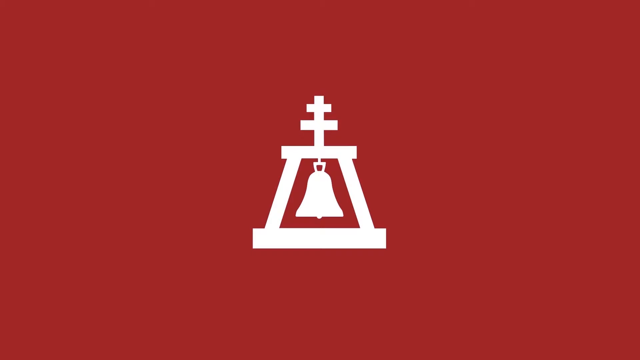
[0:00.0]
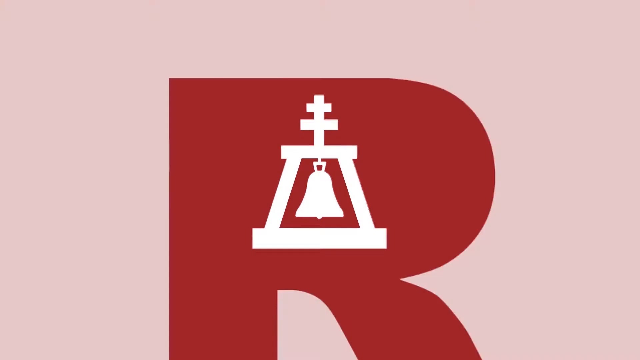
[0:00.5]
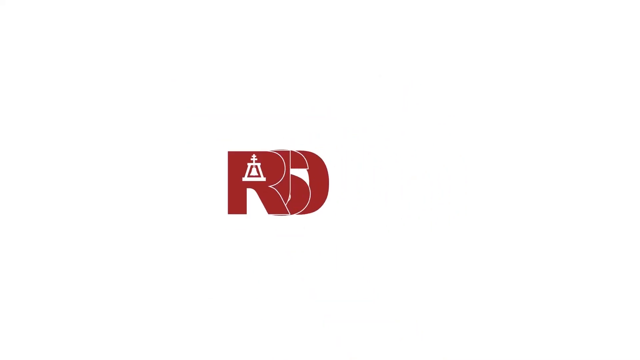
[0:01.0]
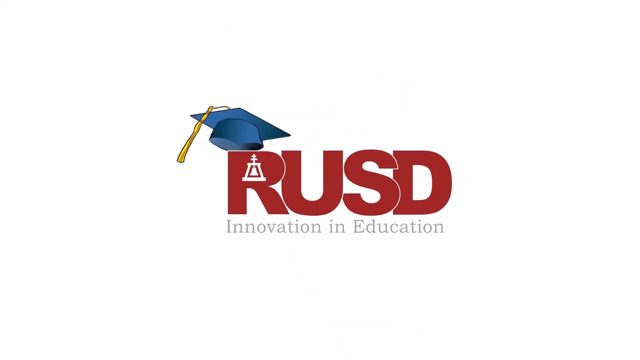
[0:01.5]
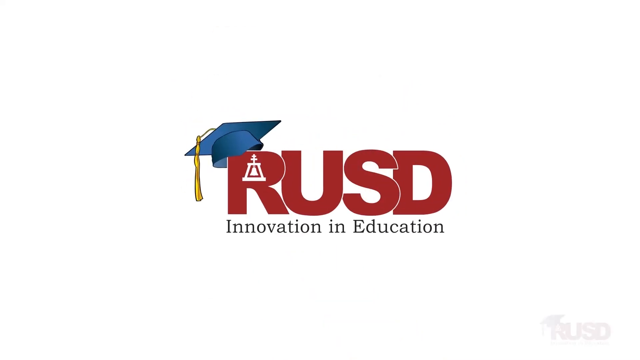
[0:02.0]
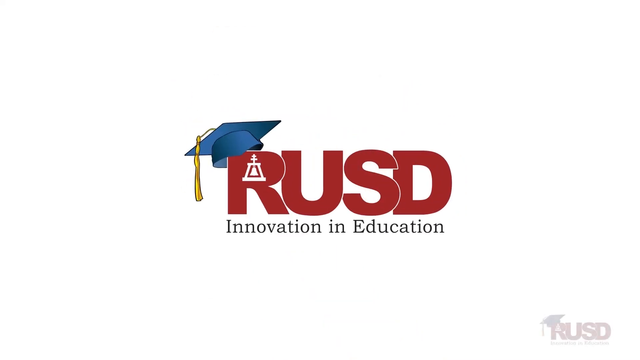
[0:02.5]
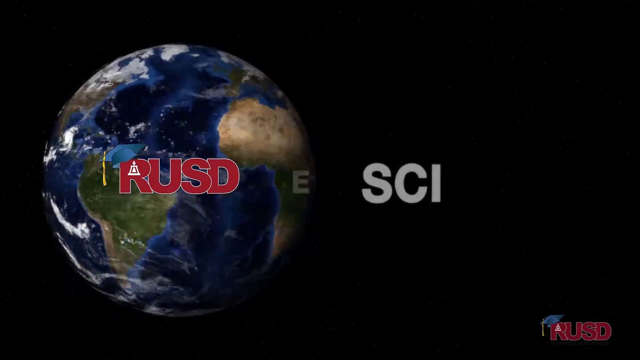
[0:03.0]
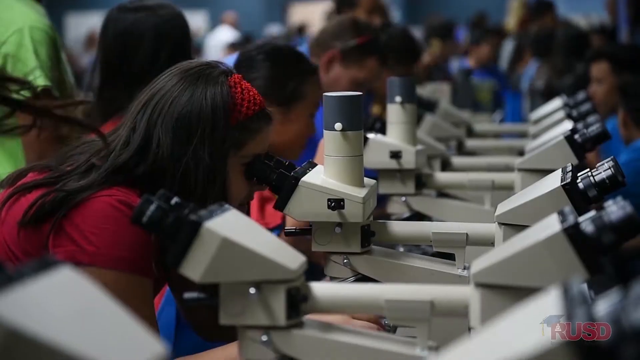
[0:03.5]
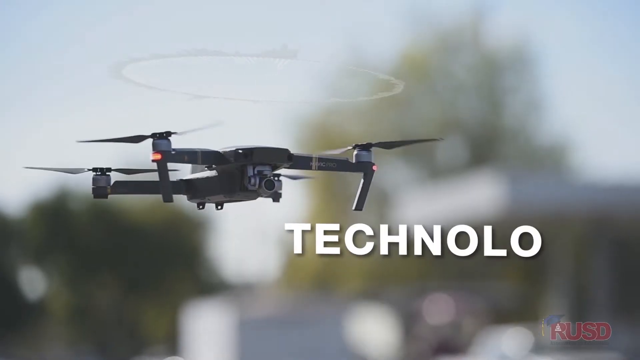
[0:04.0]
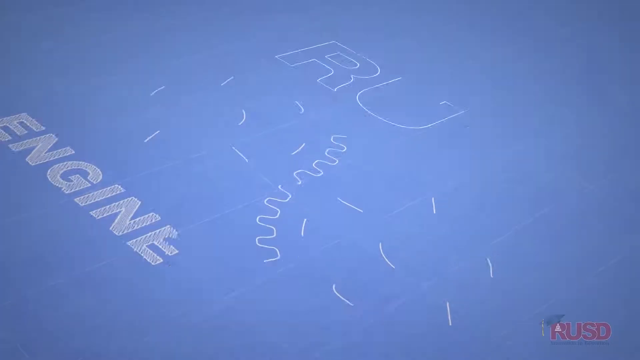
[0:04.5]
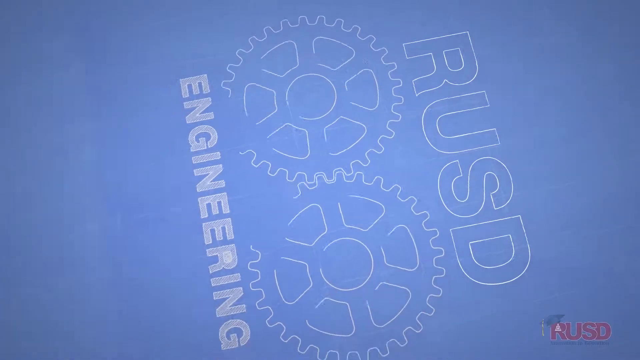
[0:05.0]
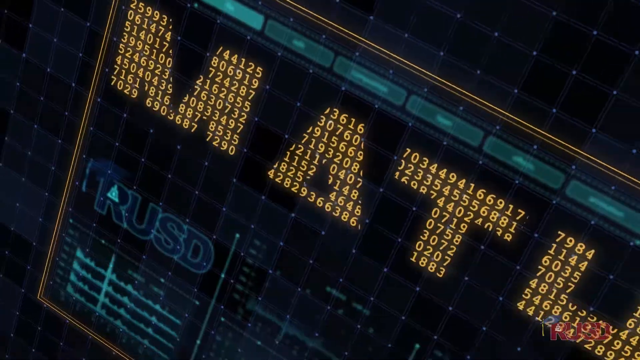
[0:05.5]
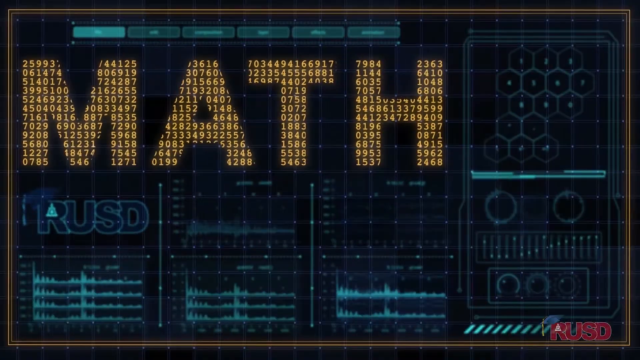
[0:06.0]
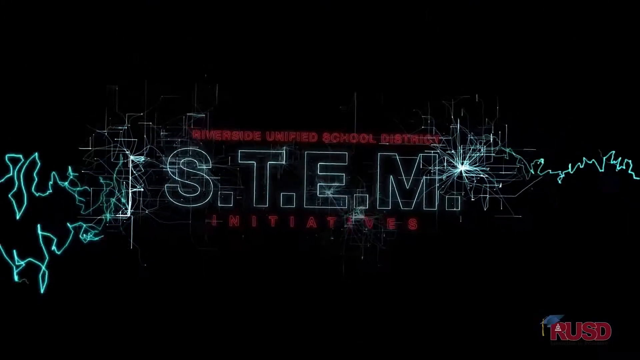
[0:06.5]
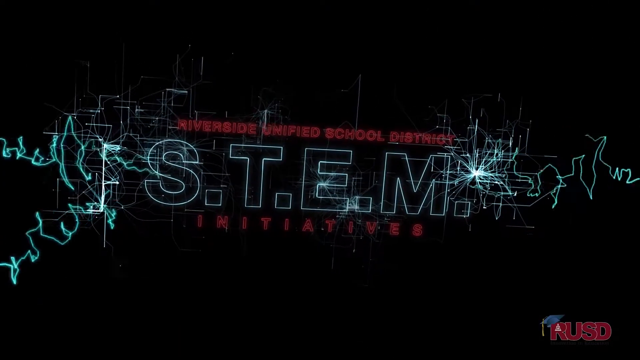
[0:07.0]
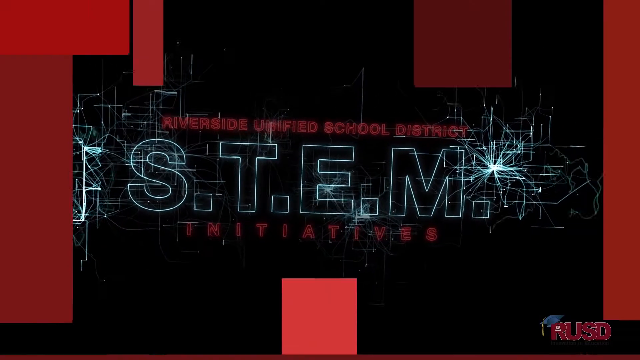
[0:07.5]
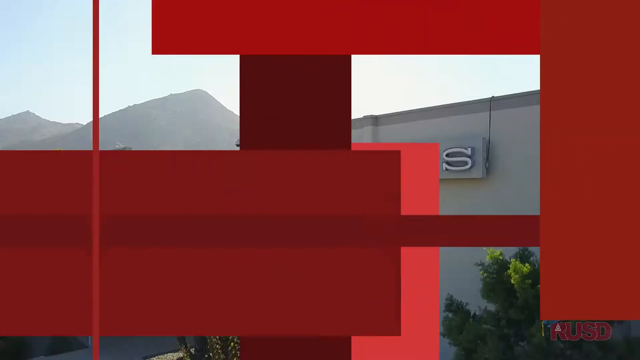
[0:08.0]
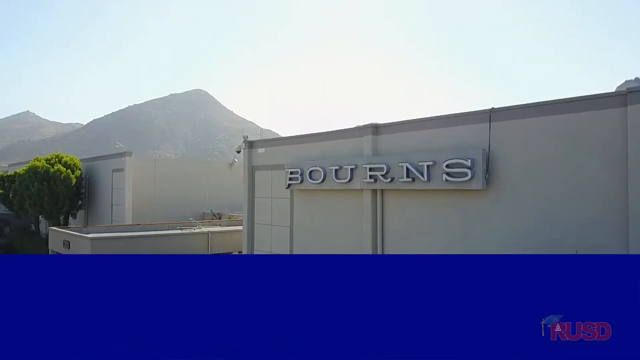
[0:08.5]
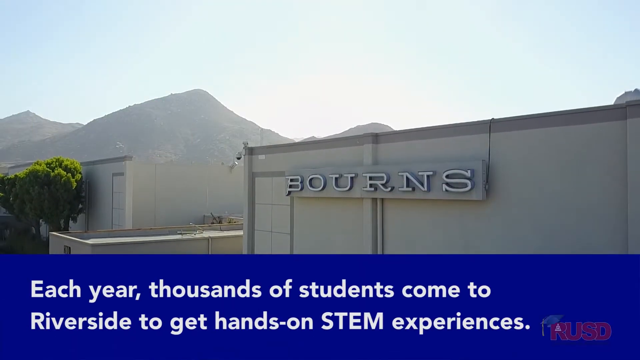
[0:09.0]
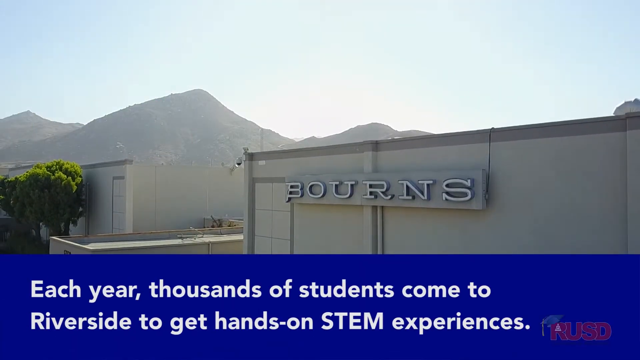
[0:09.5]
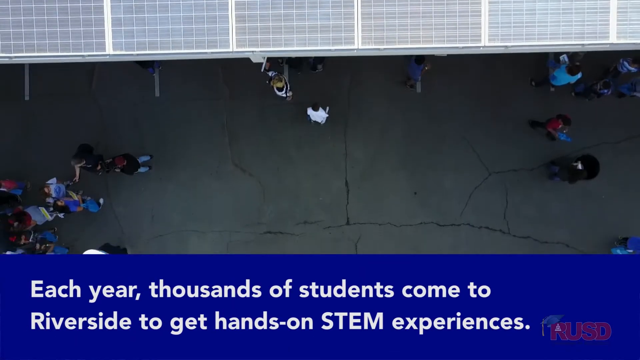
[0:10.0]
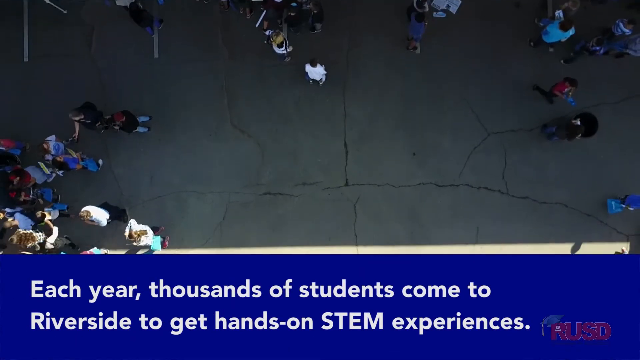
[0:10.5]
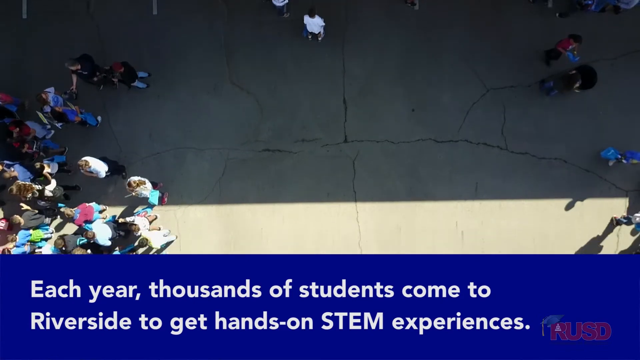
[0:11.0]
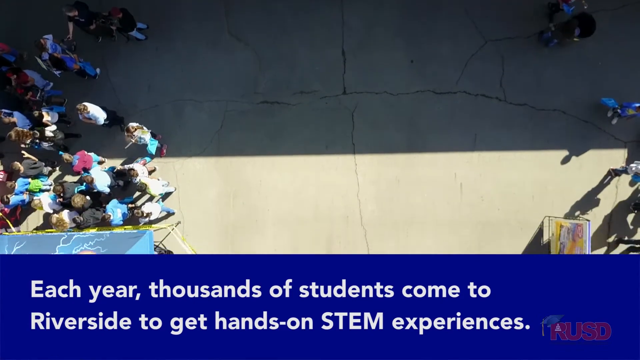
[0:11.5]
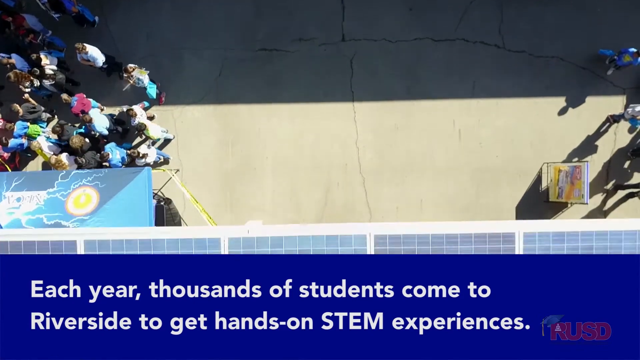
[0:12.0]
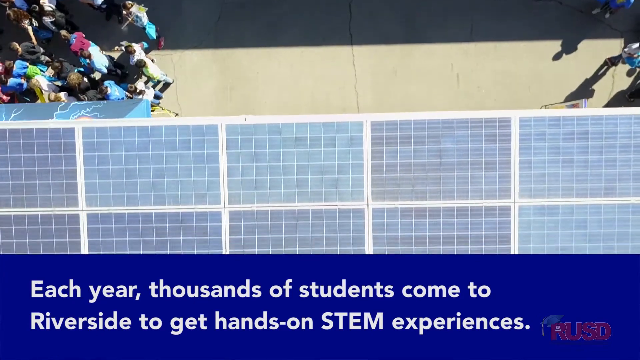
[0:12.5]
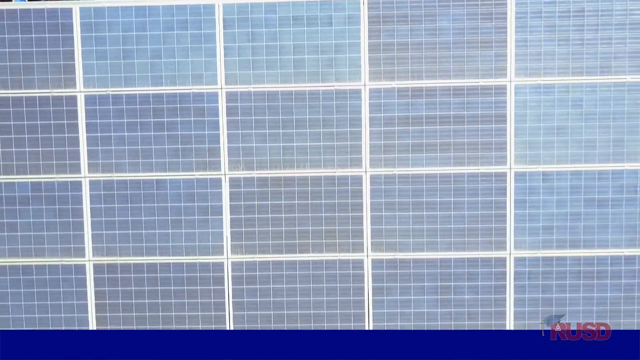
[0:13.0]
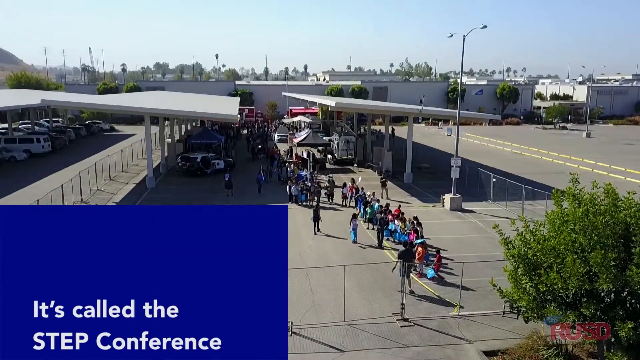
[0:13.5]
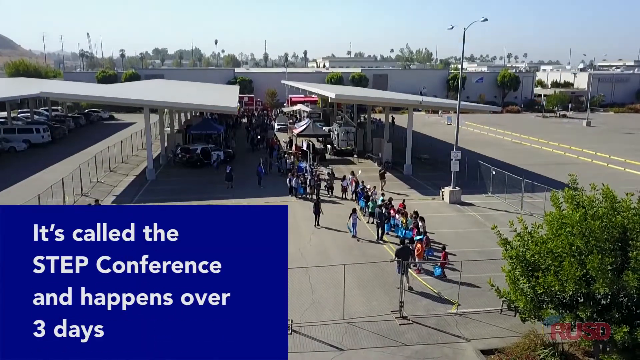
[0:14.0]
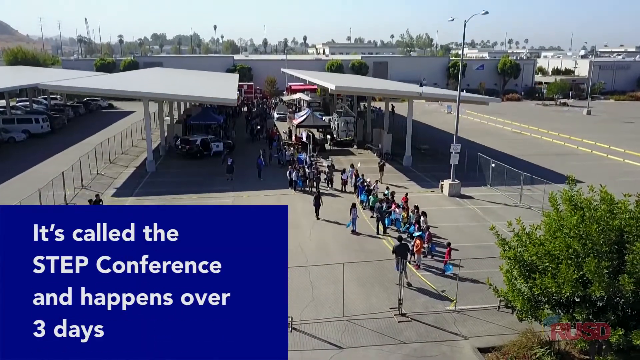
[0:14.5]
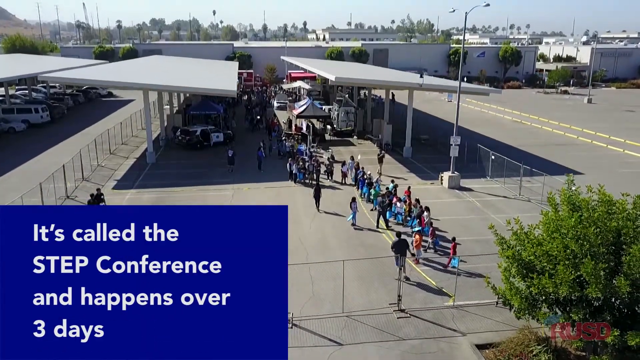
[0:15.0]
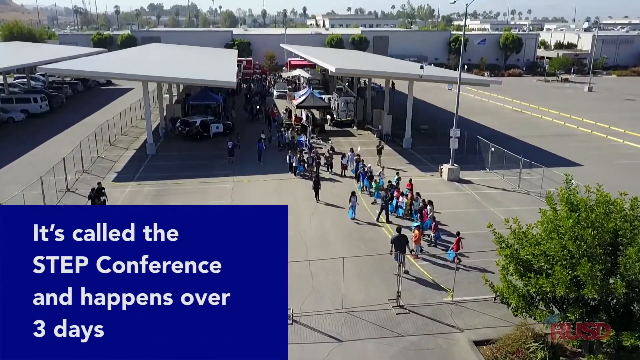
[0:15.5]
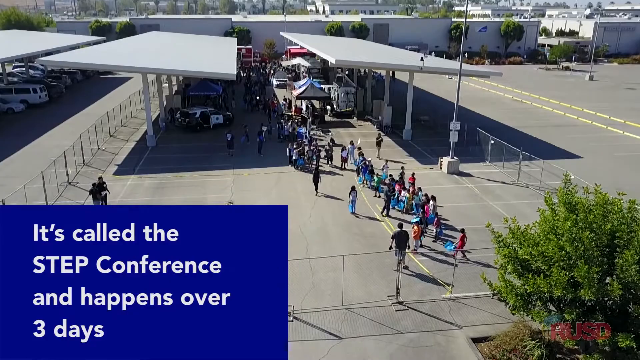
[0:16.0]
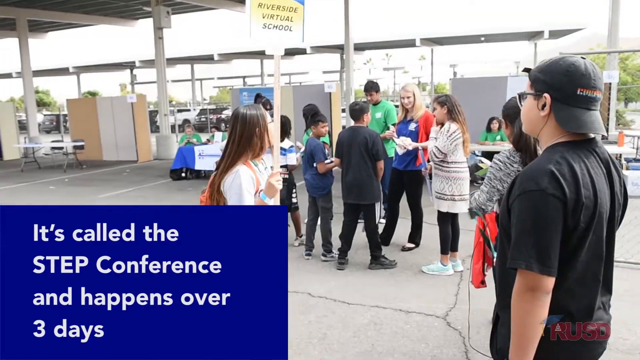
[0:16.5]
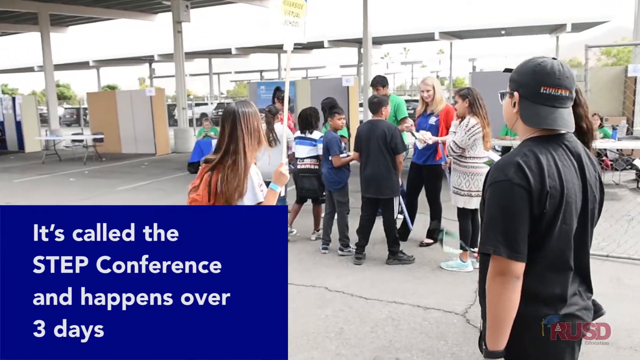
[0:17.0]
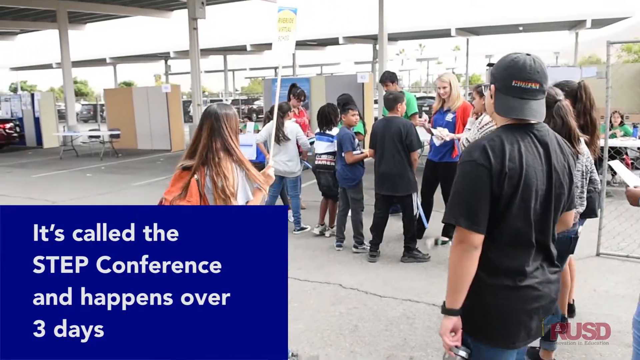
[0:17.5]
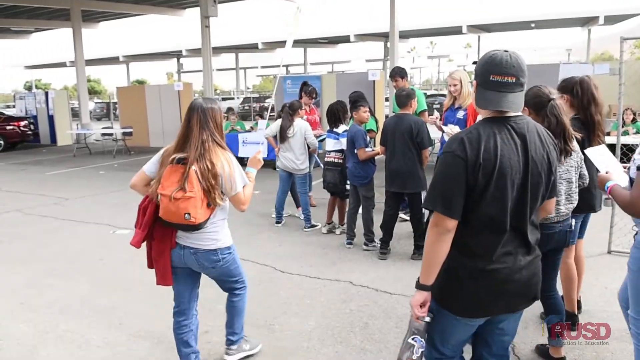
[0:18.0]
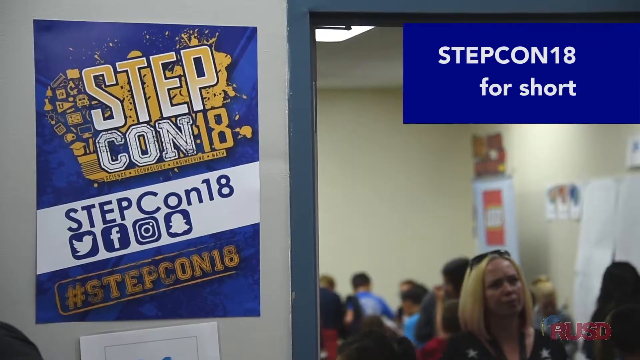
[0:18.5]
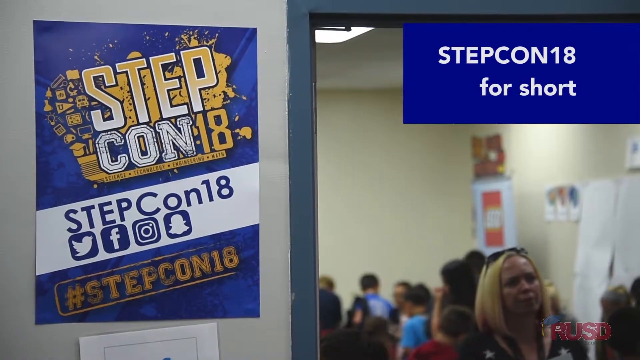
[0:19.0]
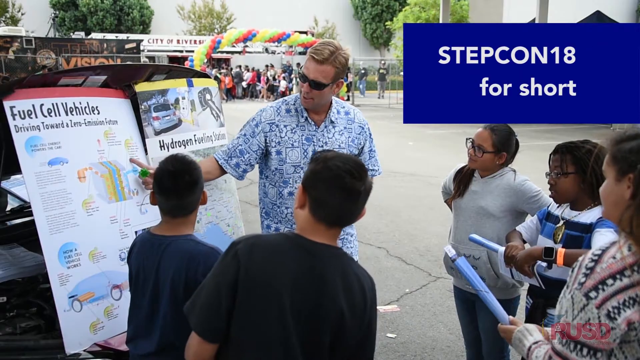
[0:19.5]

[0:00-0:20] A white bell with two white crosses appears on a red background, along with the text "RUSD," "Science, Technology, Engineering, and Math," and "STEM." On-screen text reads "each year thousands of students come to Riverside to get hands-on STEM experiences." A building has a sign on the outside that says "BORNS." Inside, thousands of students stand around at what appears to be some sort of job fair or STEM fair, perhaps a science fair. They look at different disciplines, with scientific experiments in plain view, and can ask questions of the people running the event.